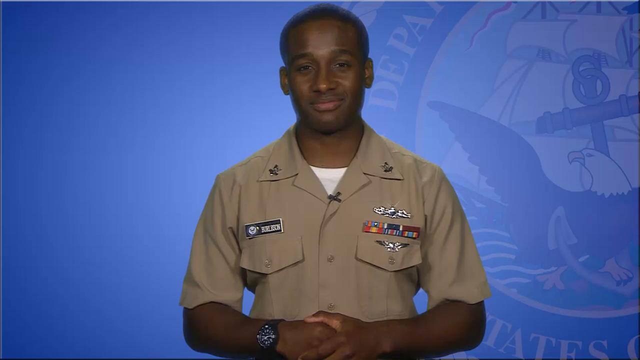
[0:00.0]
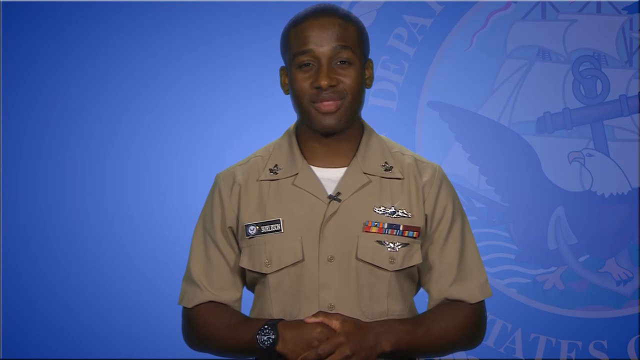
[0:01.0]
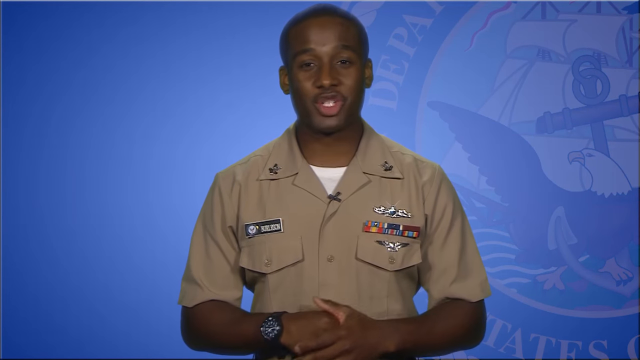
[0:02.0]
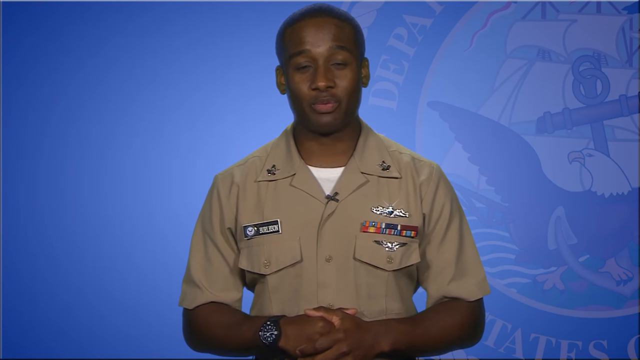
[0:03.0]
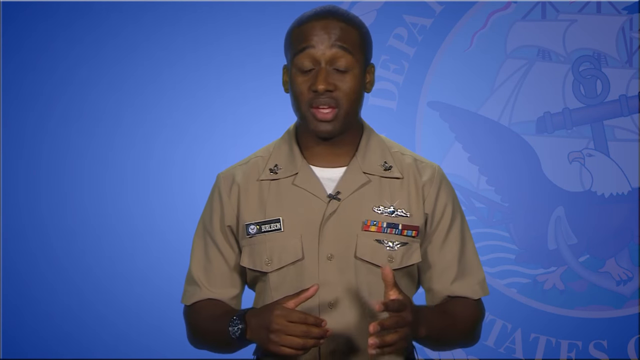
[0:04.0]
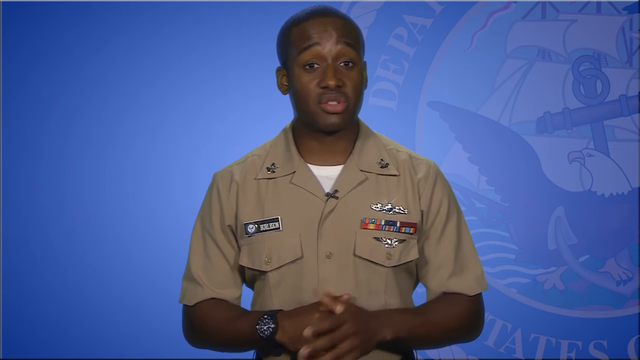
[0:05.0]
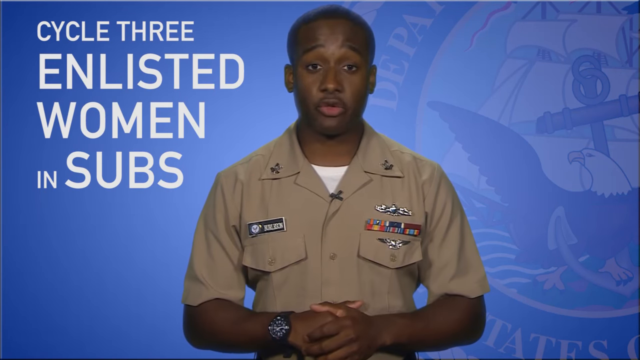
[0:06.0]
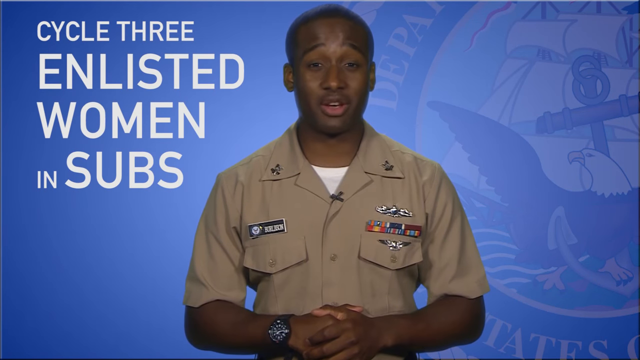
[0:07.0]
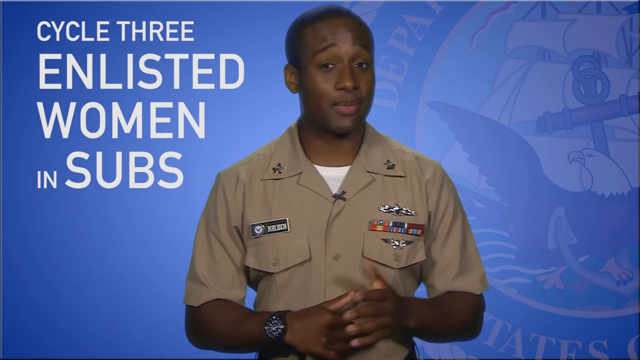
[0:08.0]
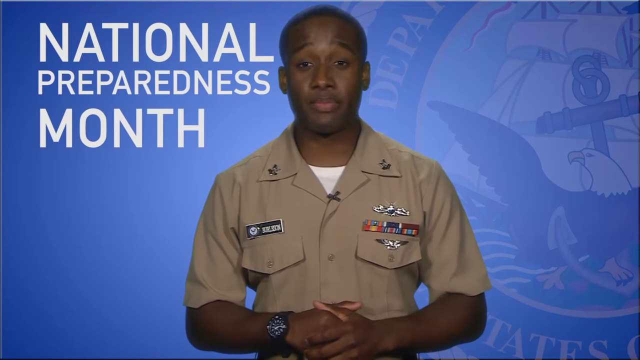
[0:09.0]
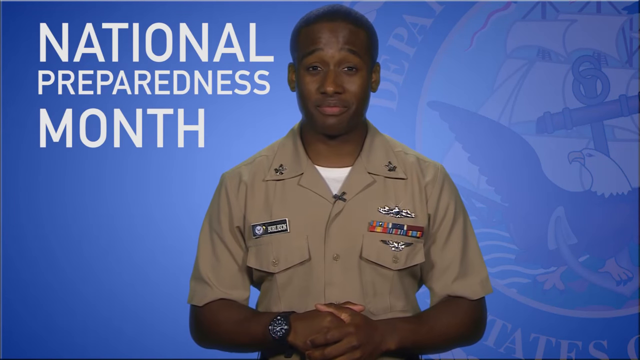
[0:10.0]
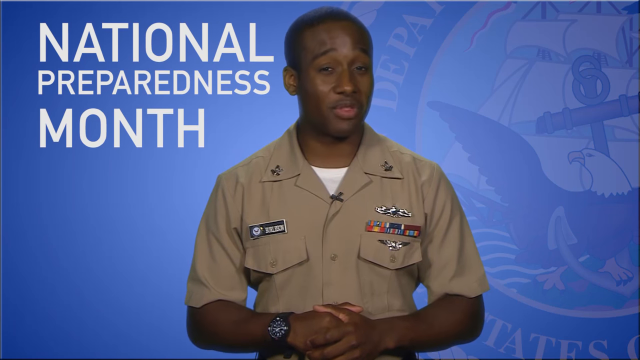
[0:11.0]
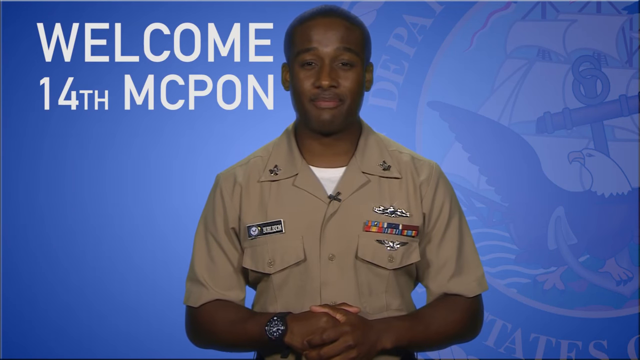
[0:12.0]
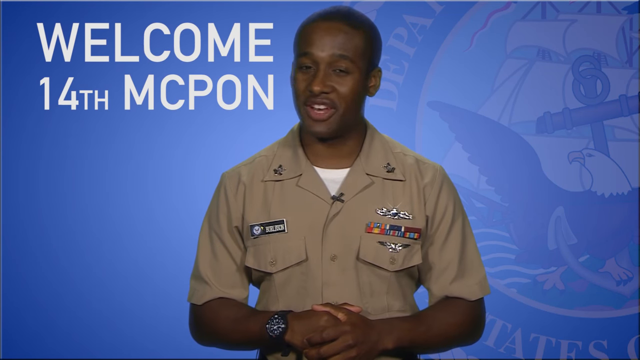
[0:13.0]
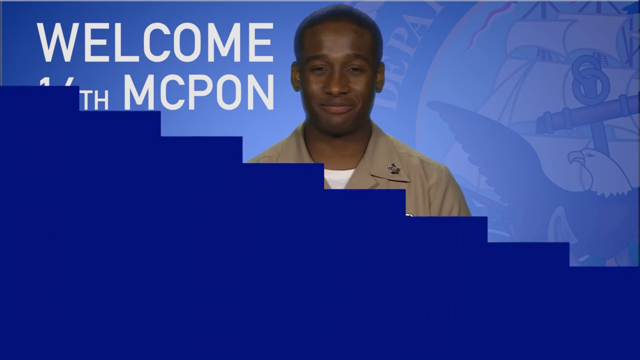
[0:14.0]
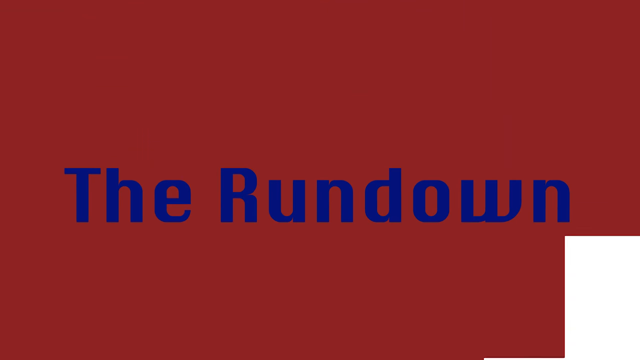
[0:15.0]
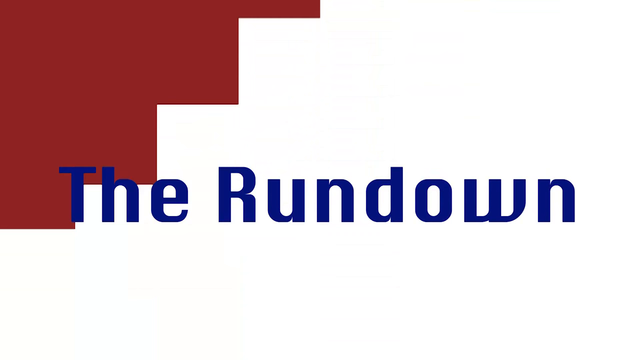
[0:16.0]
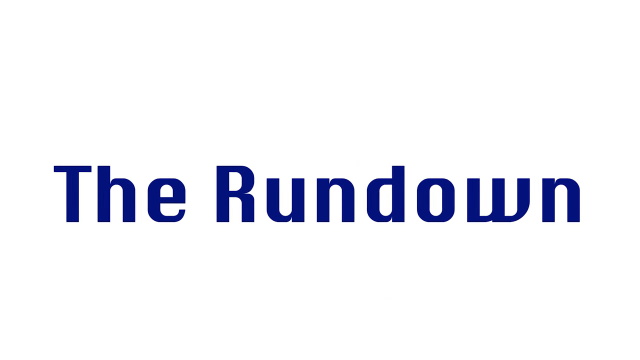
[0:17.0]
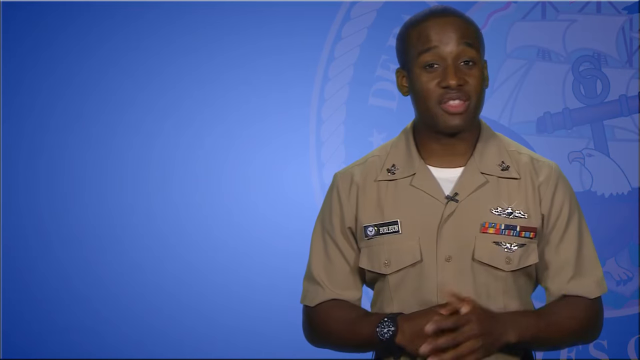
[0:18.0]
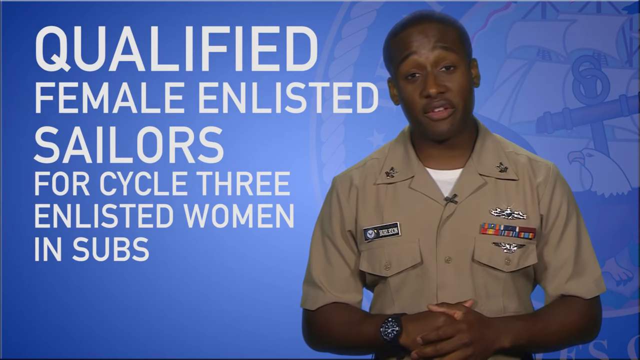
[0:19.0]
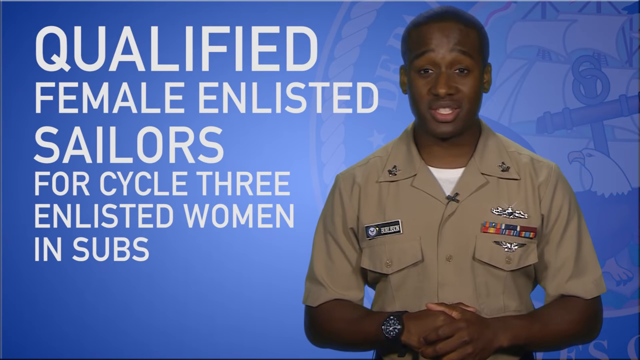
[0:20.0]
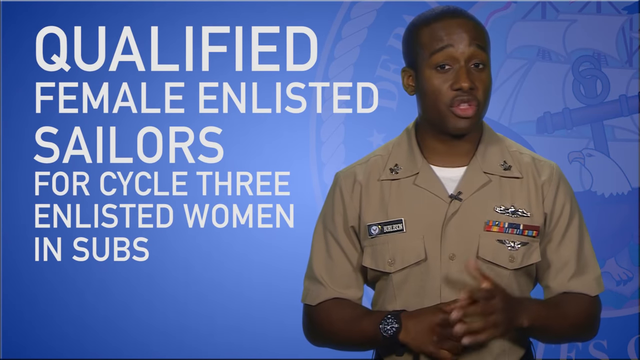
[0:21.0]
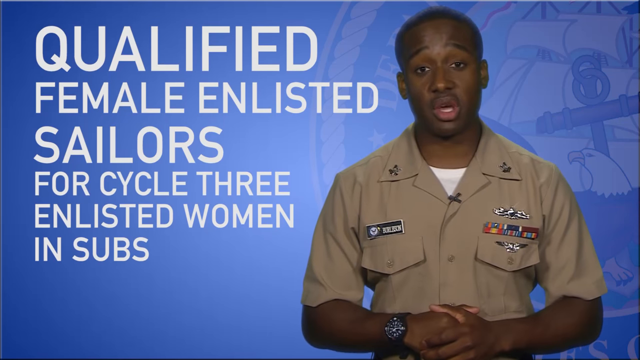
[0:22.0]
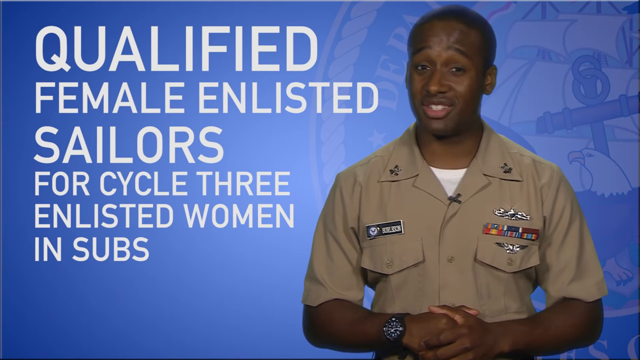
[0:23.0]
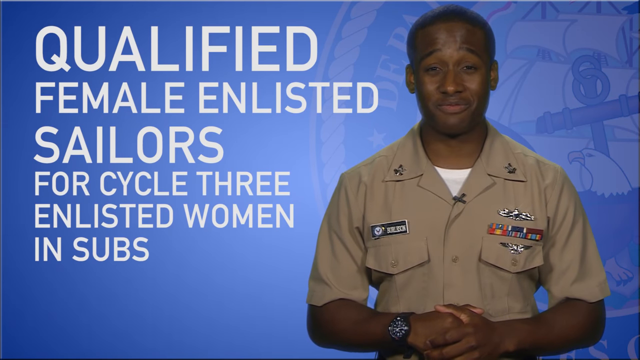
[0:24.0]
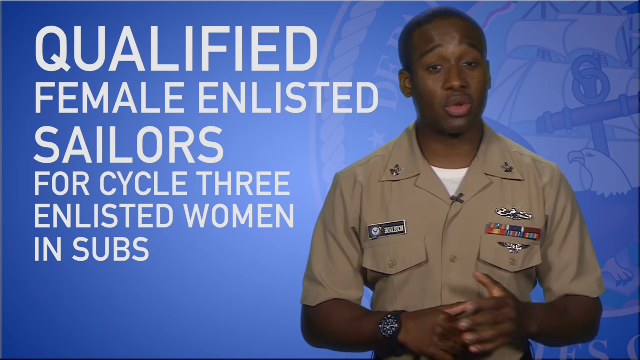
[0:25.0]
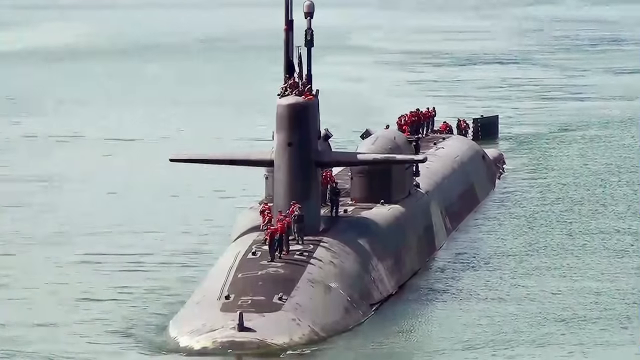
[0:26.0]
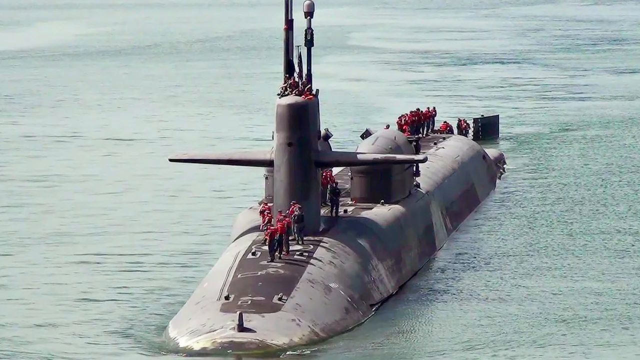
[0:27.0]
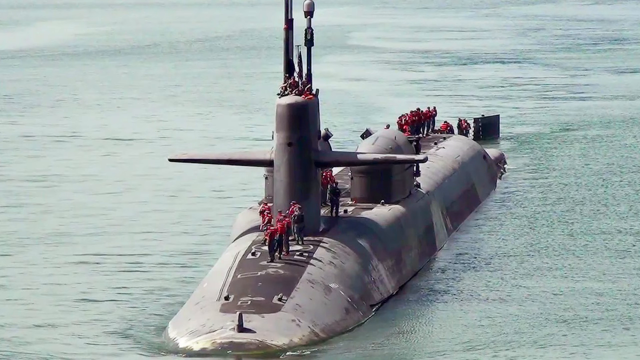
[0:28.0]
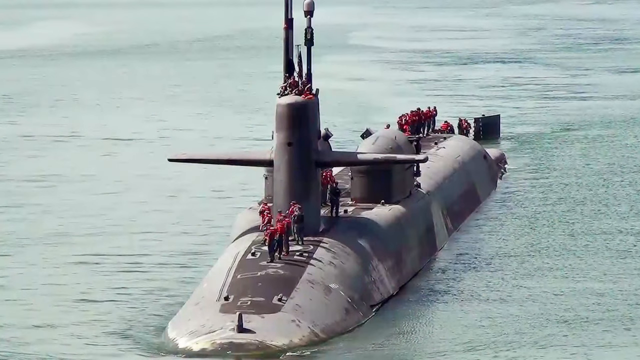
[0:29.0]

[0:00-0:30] A member of what looks like the U.S. Navy, wearing his uniform, speaks directly into the camera. Text comes up on the left side reading "Cycle 3, enlisted women in subs," then "National Preparedness Month," and then "Welcome 14th McPawn." A different graphic then comes up and overlays the entire screen, reading "The Rundown." The shot returns to the sailor, who is a little more to the right than before, with a blue background still behind him and larger white text on the left side reading "qualified female enlisted sailors for Cycle 3, enlisted women in subs." He is still speaking as this text comes up. An image then slides in full screen: a still image of a submarine on the surface of the water, with a number of crewmen standing on top of it at both the back and front sections of the sub.